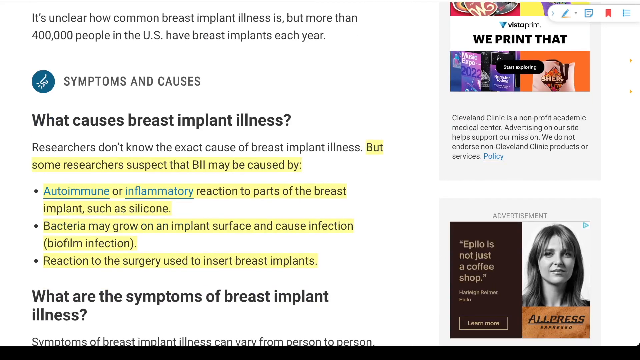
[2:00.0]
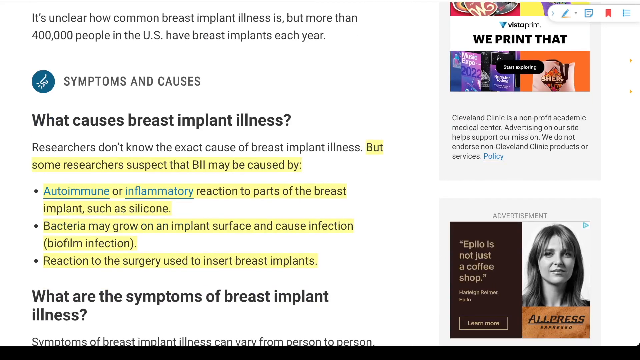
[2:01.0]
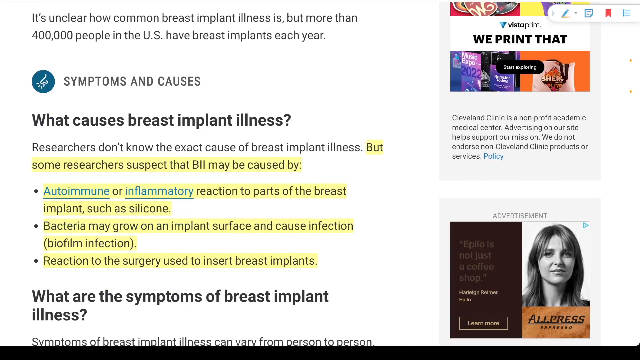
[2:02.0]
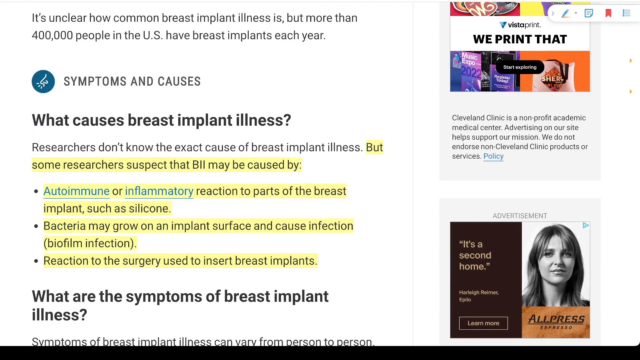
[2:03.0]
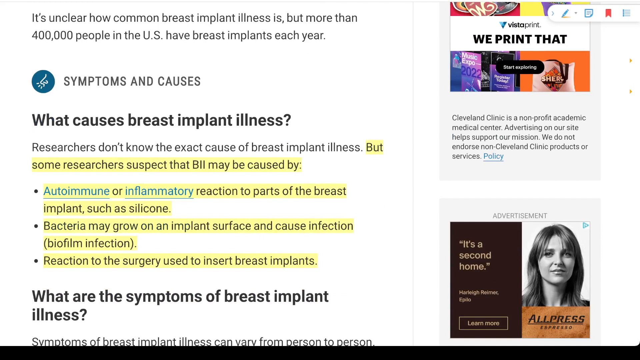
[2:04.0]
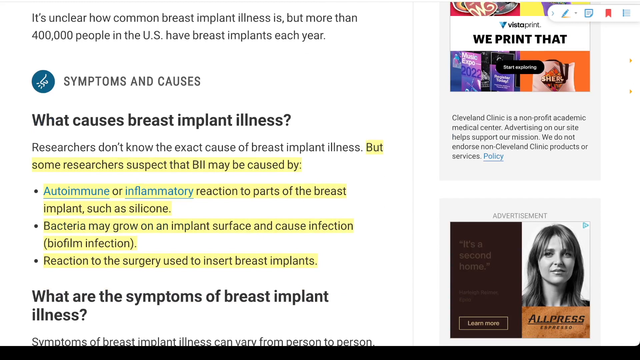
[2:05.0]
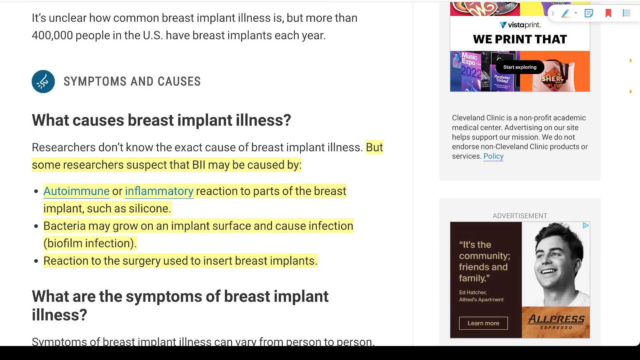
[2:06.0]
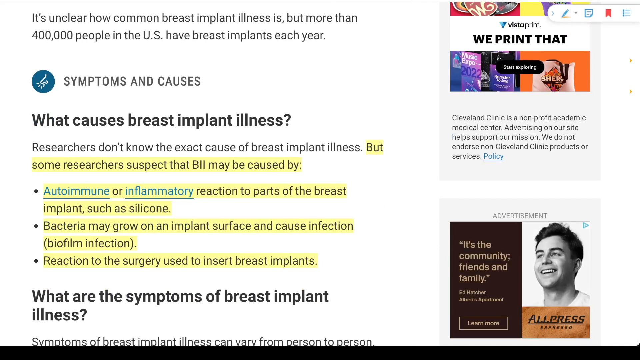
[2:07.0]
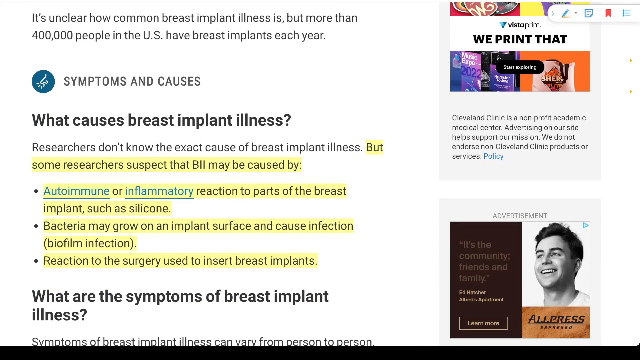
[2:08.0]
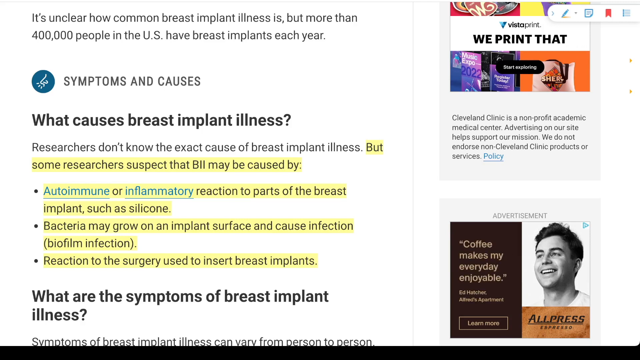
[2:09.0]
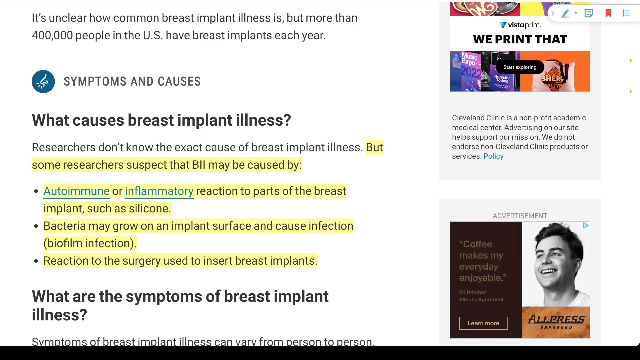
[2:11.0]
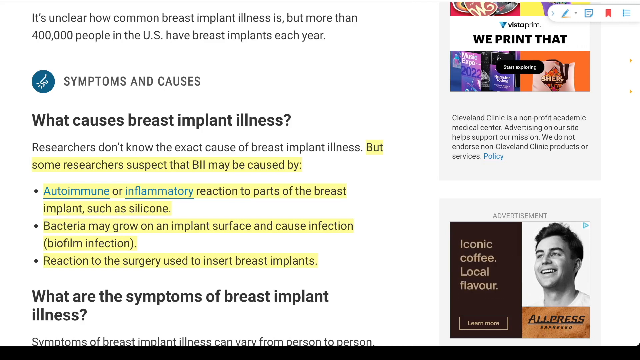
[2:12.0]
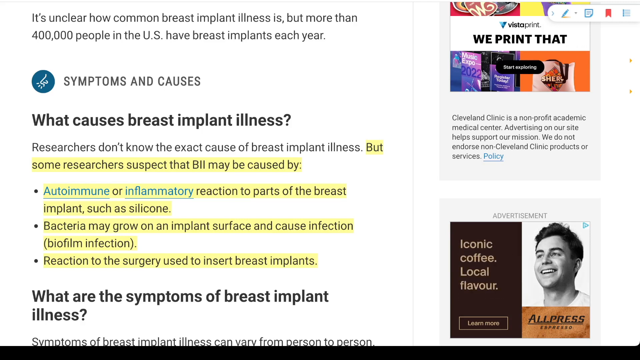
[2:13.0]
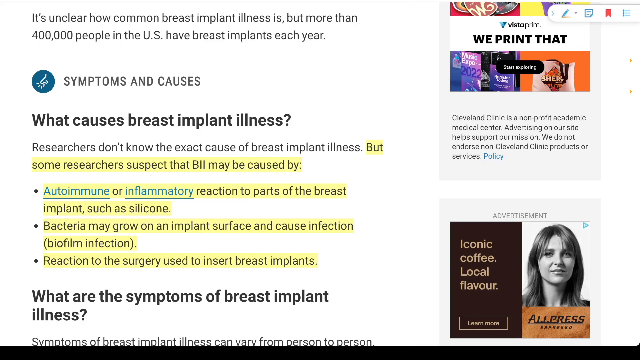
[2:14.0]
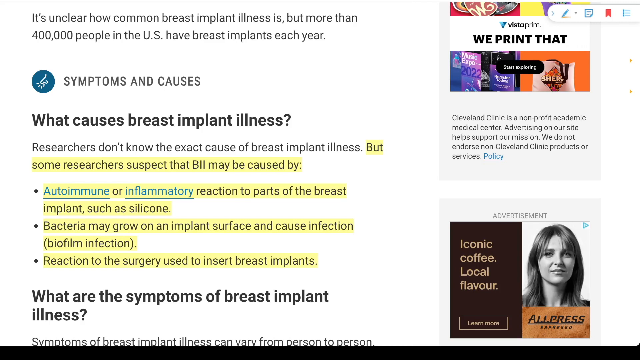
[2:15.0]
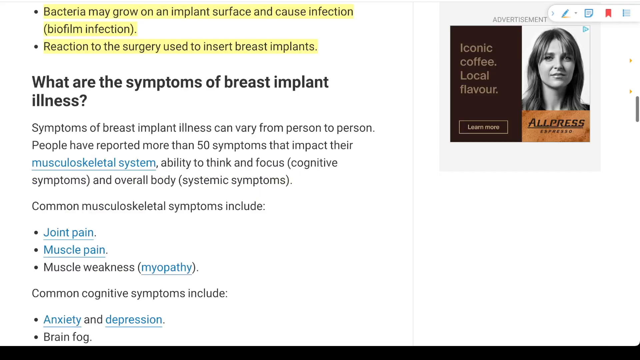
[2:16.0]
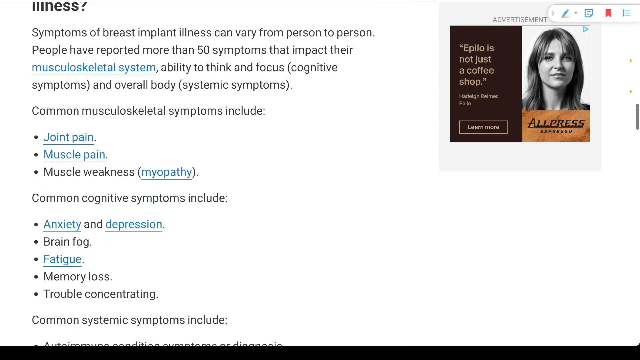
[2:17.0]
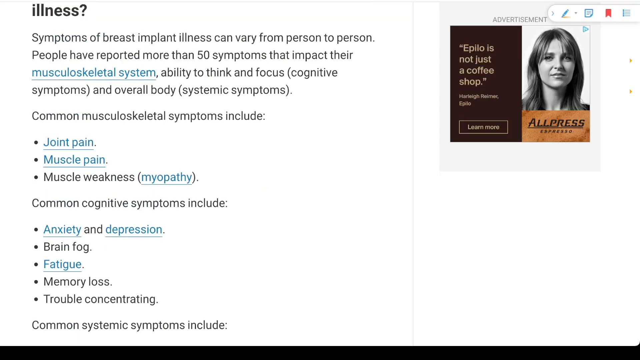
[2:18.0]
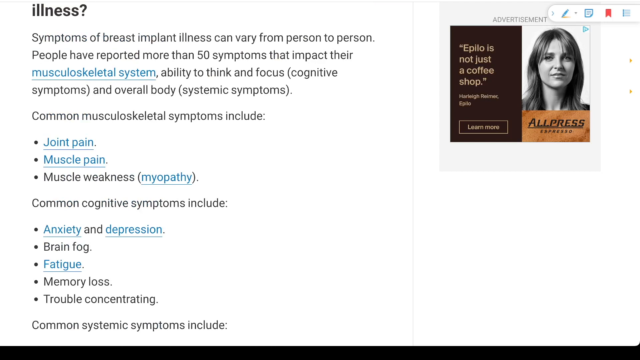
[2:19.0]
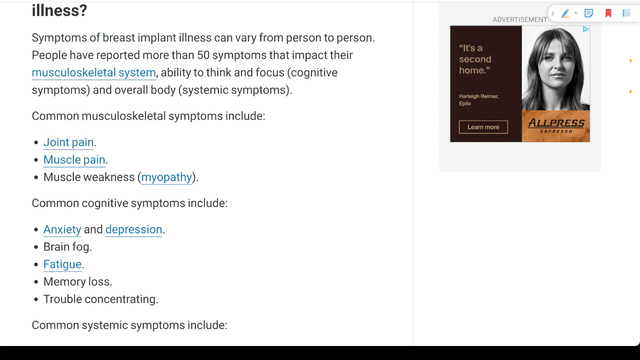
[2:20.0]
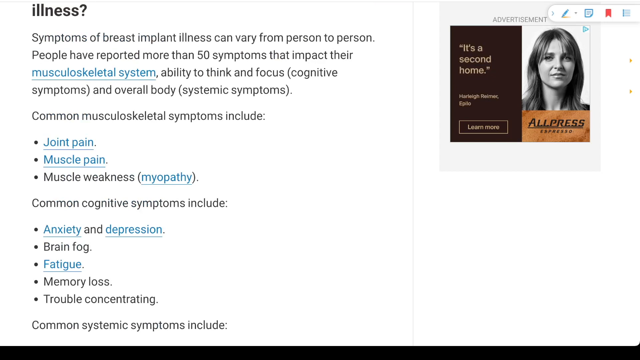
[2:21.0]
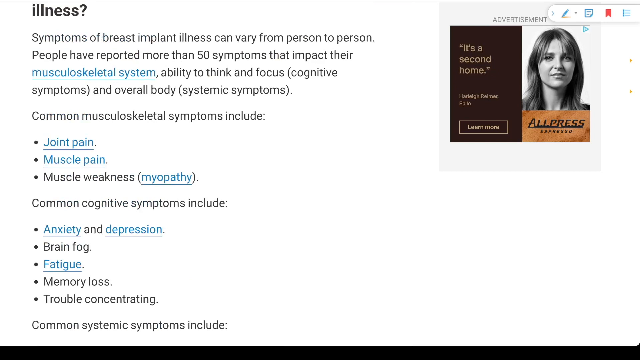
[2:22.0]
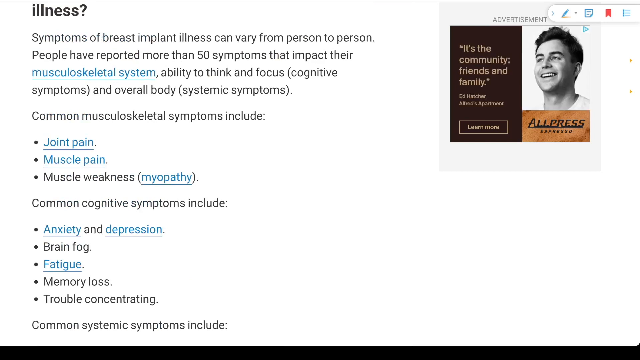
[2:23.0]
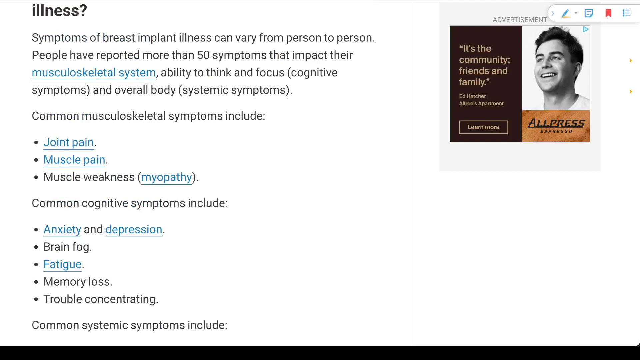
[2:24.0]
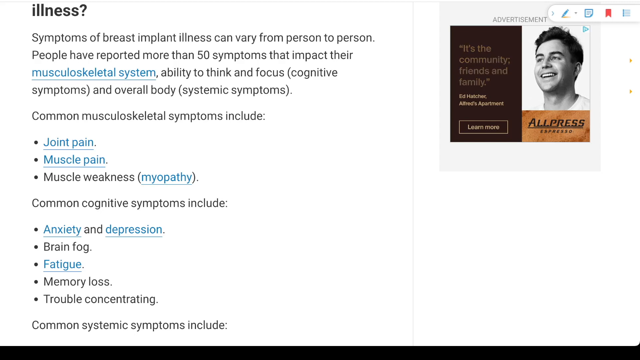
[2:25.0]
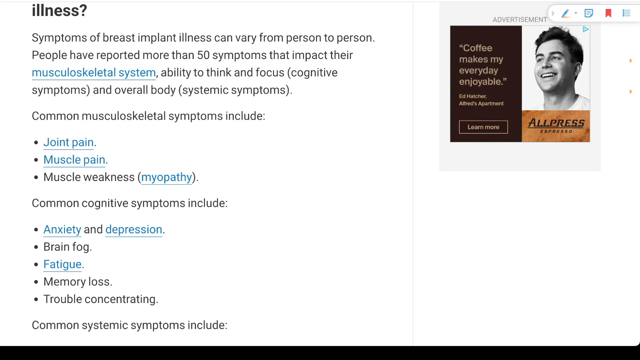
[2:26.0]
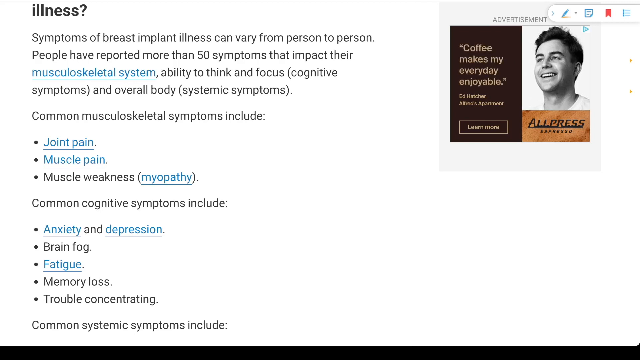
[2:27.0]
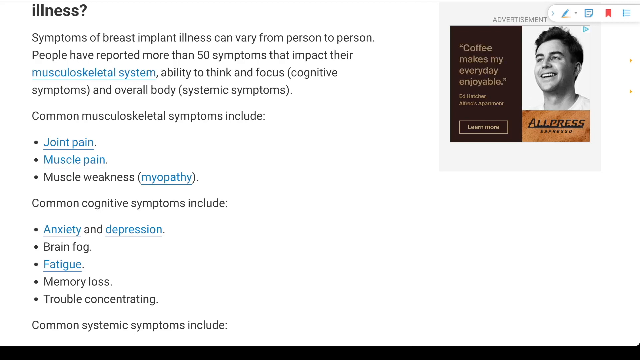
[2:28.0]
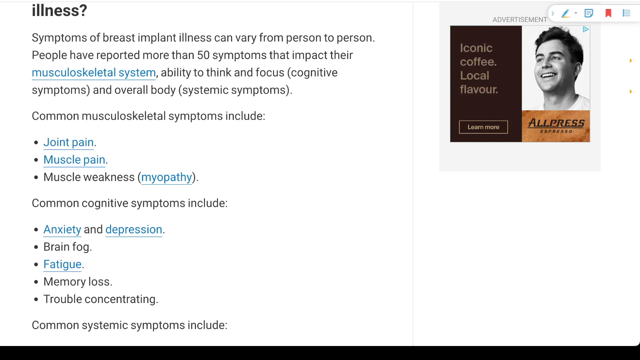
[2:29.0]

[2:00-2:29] New ads appear on the right-hand side with images. Below them is a picture of a woman in what is apparently an ad for a coffee shop. The ad is animated and changes a couple of times, showing different quotes about coffee such as "coffee makes my everyday enjoyable," "an iconic coffee" and "local flavor," and the picture switches between a woman and a man; the man is white with black hair. The page scrolls down to the medical section on the symptoms of the illness and how they vary. The ad at the bottom also changes over the course of the scene.